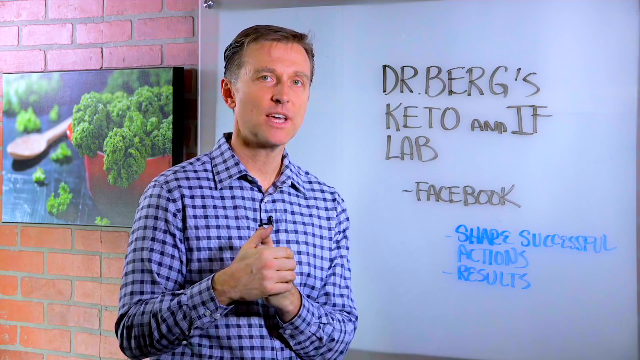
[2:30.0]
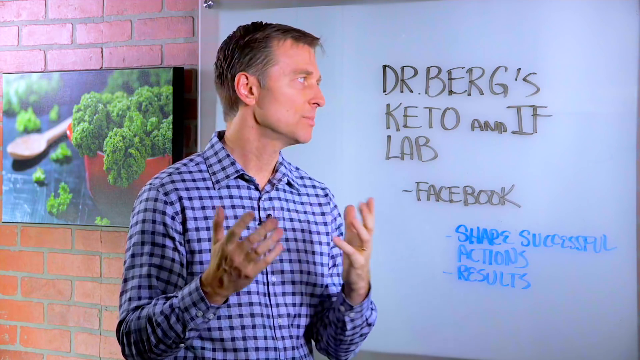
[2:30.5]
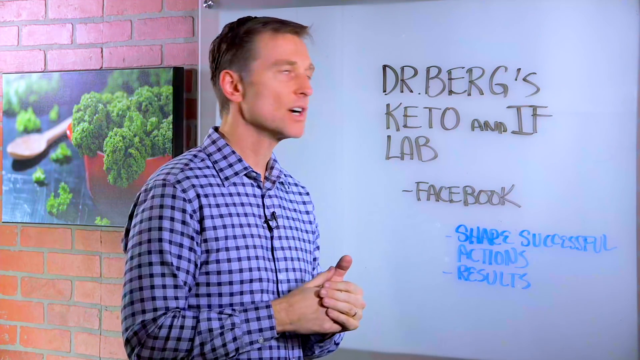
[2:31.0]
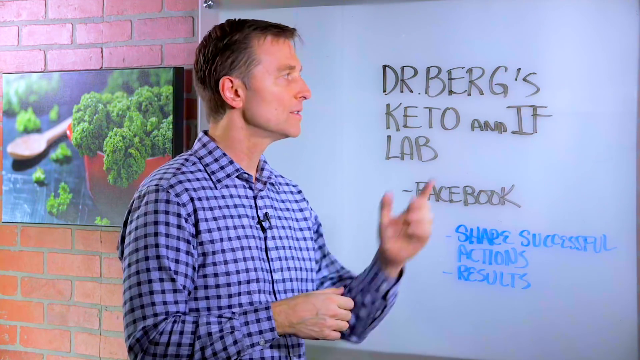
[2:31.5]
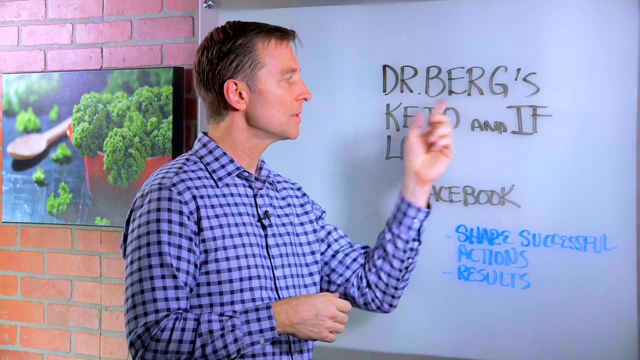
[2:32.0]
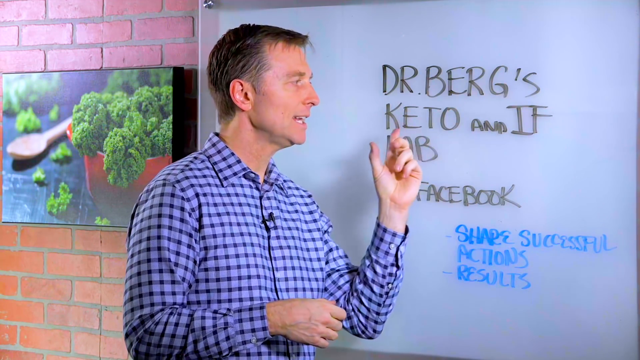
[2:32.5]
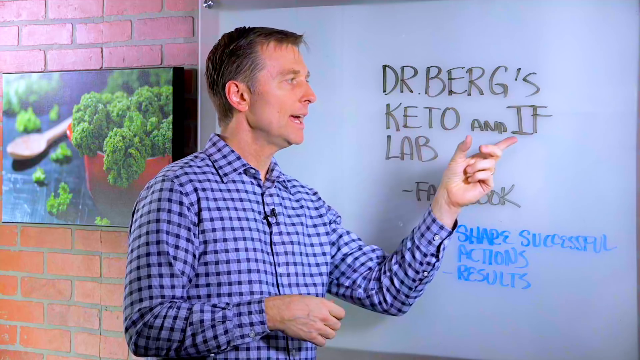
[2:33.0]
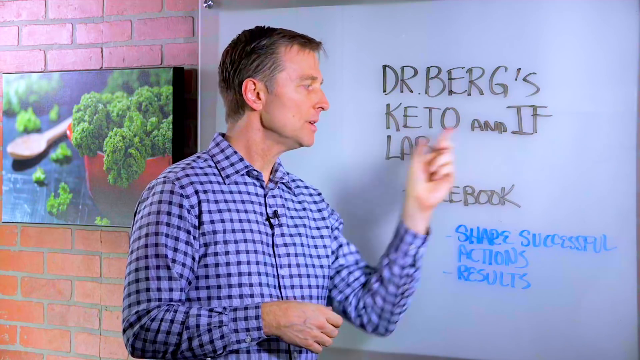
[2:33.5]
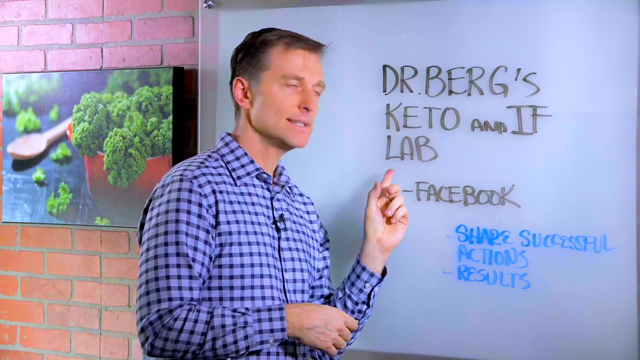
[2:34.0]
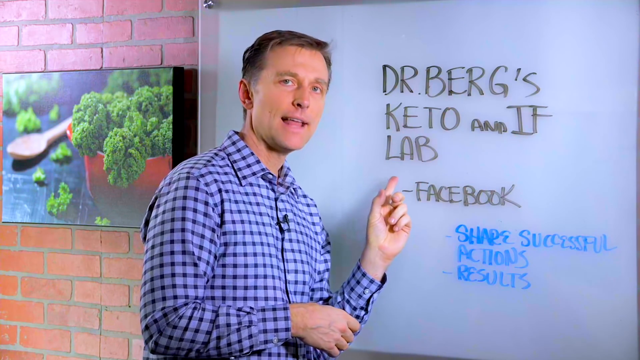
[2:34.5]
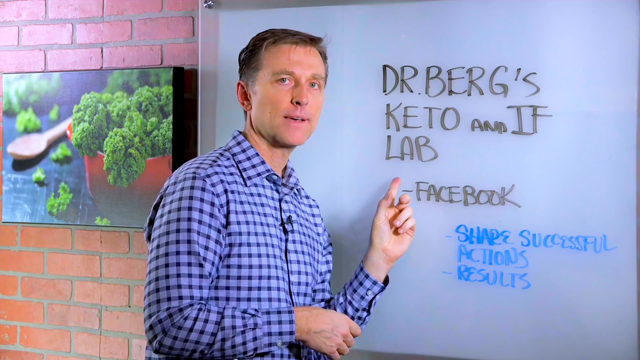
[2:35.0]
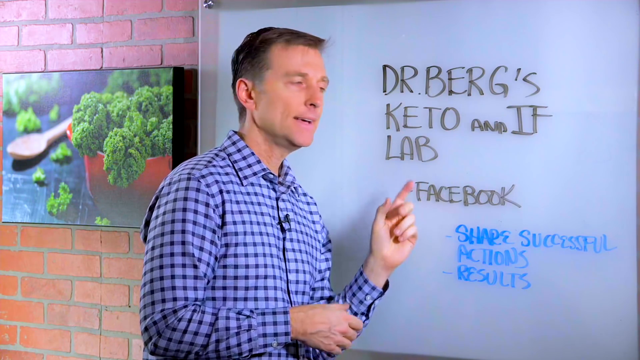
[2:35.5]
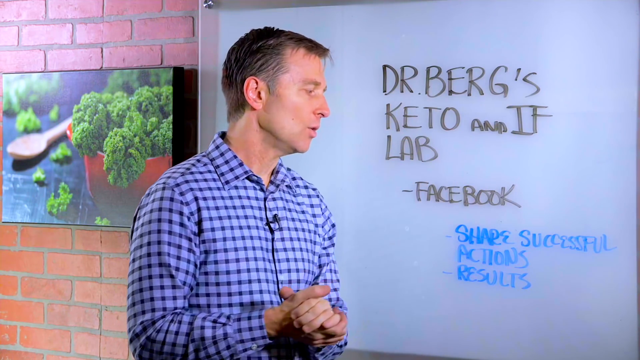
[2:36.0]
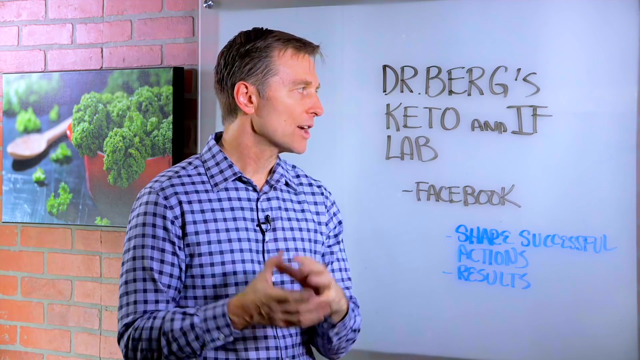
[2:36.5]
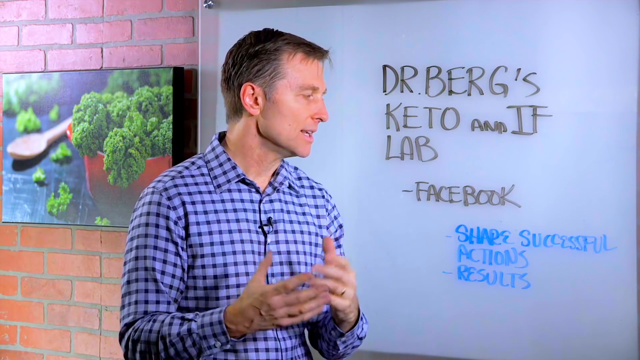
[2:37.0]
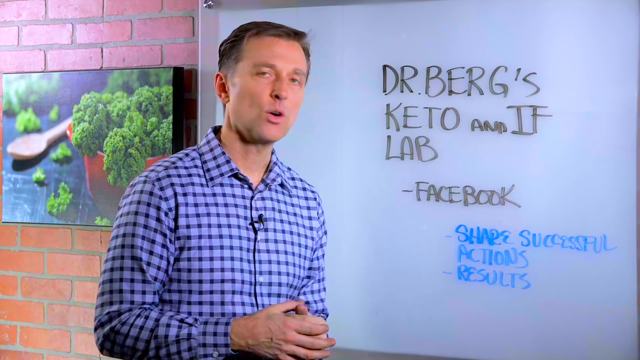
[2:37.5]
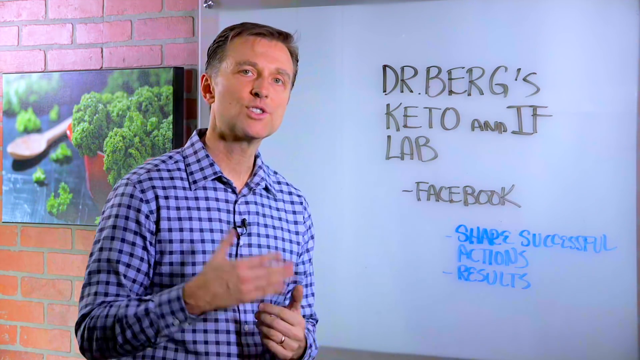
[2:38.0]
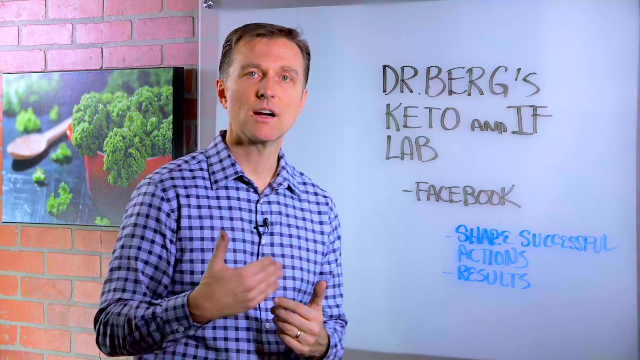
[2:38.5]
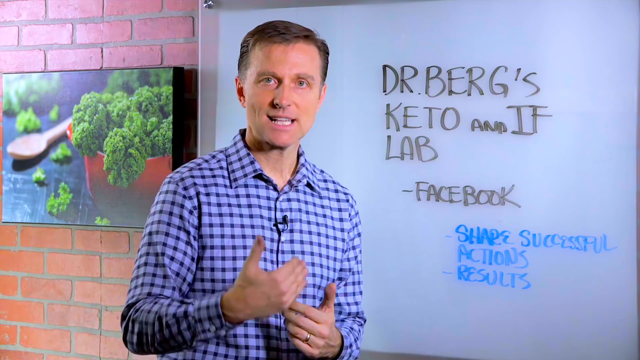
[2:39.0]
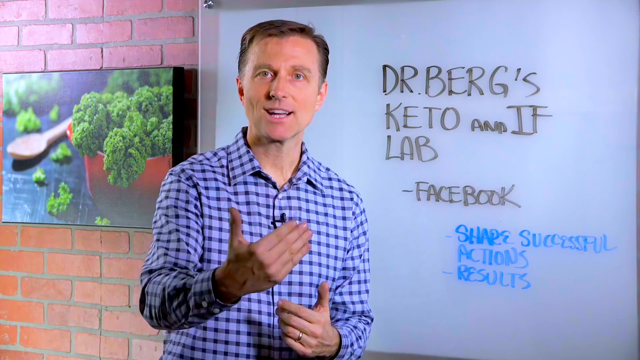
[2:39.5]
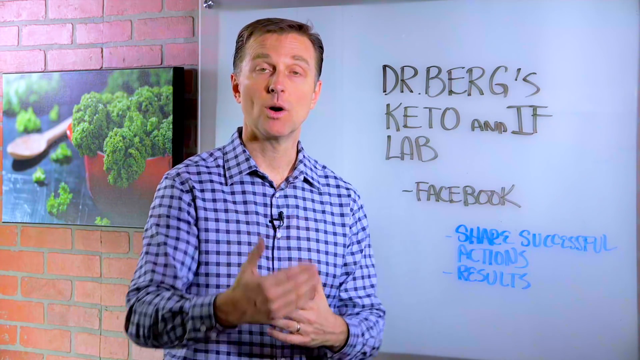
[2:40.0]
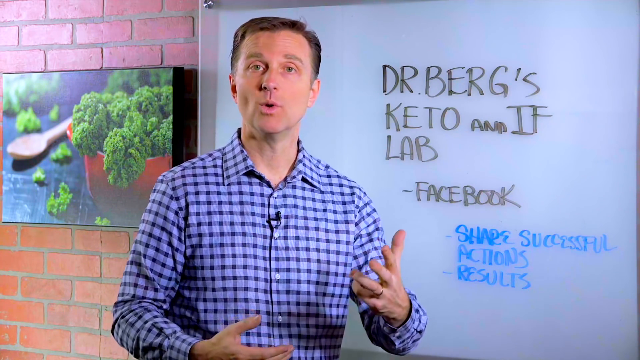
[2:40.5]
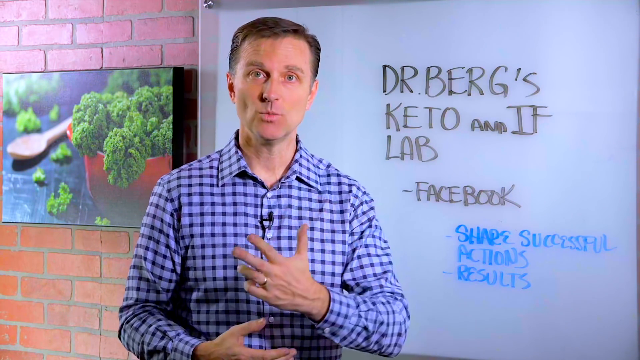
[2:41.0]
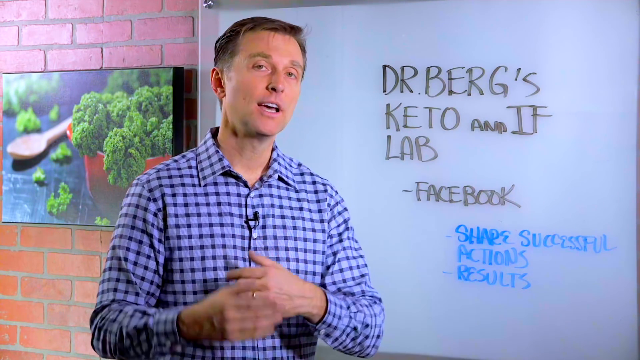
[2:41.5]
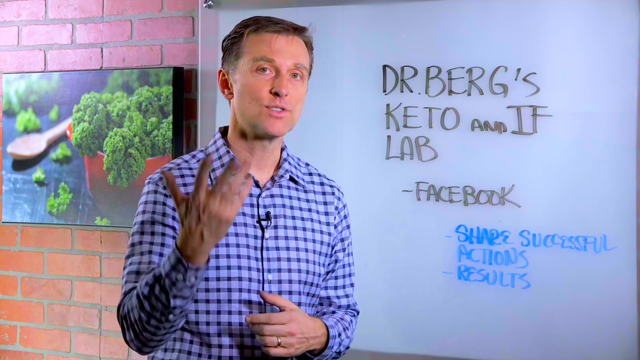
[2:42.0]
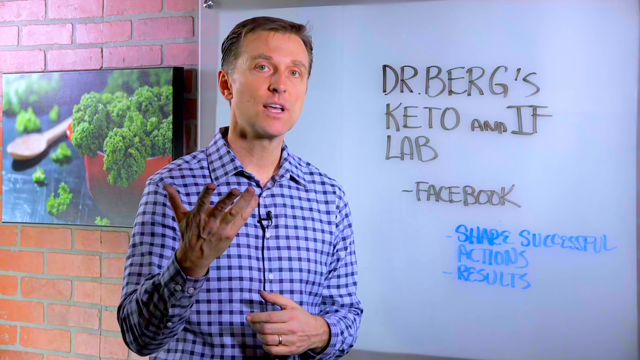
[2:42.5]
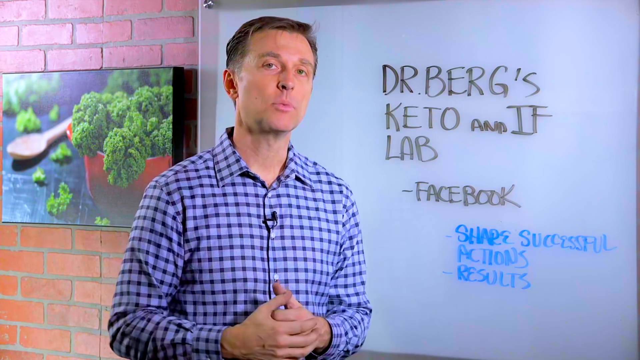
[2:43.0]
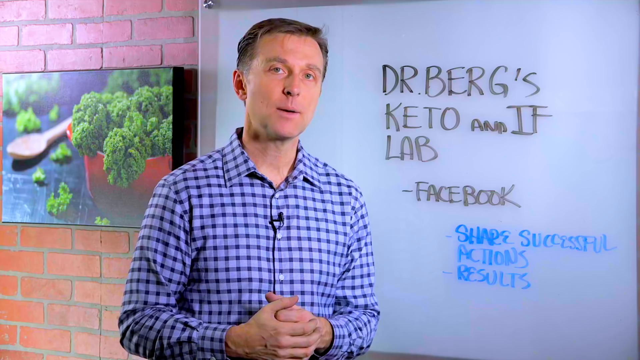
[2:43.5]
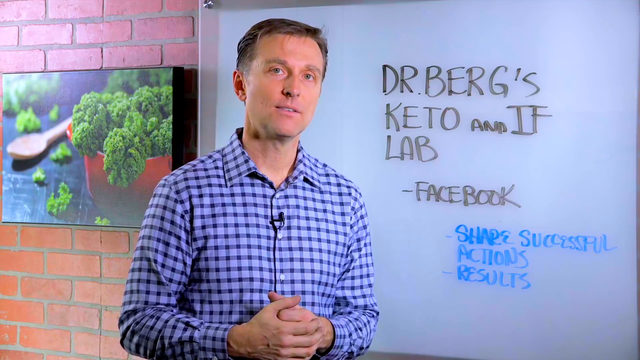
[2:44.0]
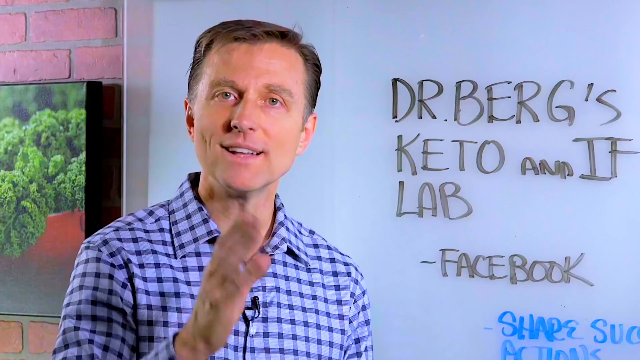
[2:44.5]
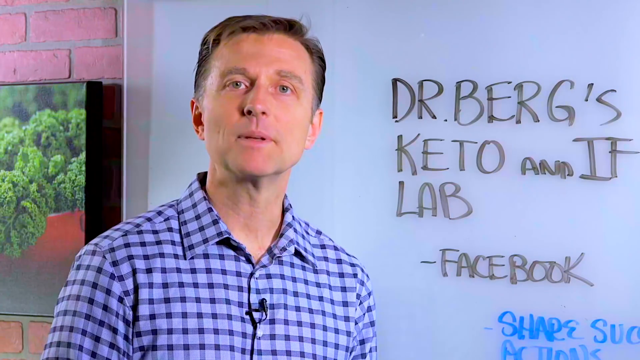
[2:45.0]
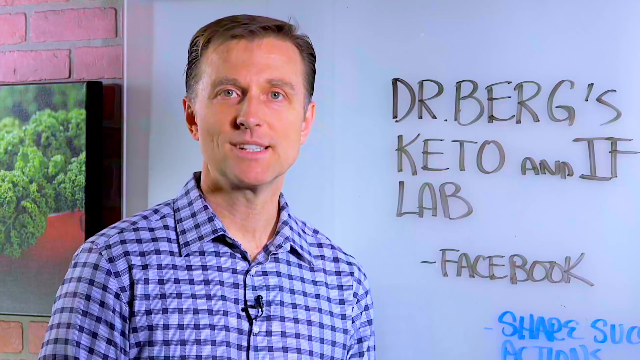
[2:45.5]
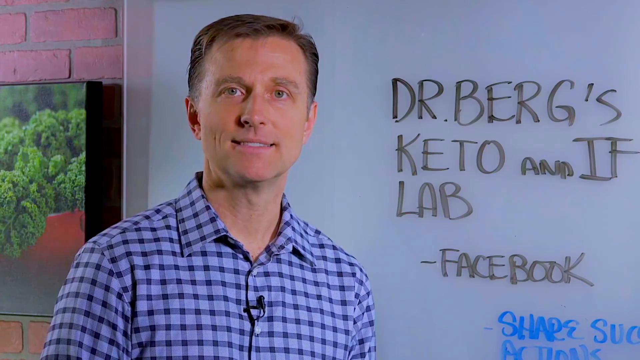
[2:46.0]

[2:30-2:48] Dr. Berg stands indoors with a large rectangular whiteboard on which he has written in black and blue markers "Dr. Berg's keto and intermittent fasting lab," below that "Facebook," below that in blue "share successful actions," and below that "results." He wears a long-sleeved, collared, dark and light blue checkered shirt with the top button unbuttoned. He is Caucasian, trim, and perhaps in his late 40s. He points with his left pointer finger to the words "keto," "if" and "lab." His head turns to the board and then faces the audience again. He rotates his right and left hands, lifting each hand, apparently as he makes a point.